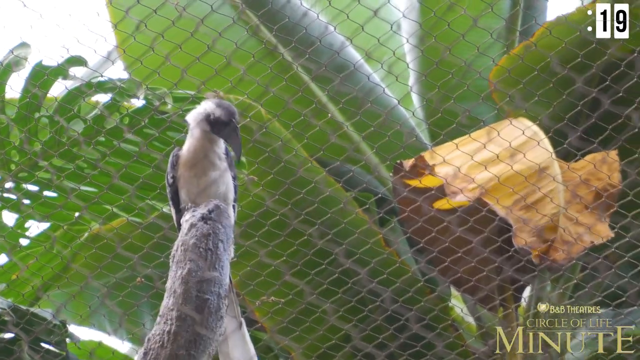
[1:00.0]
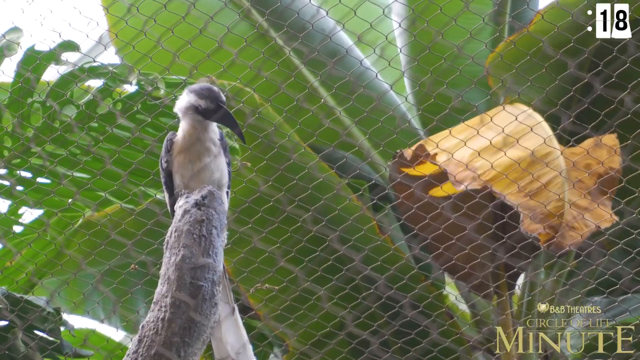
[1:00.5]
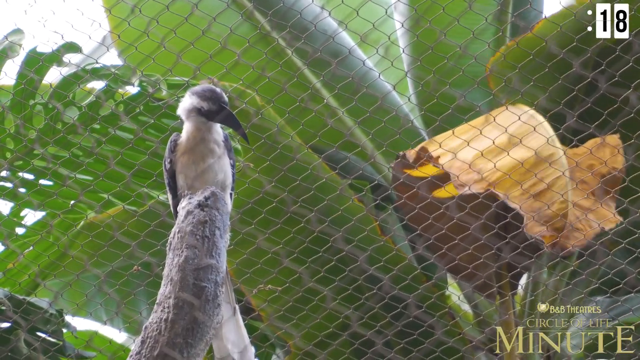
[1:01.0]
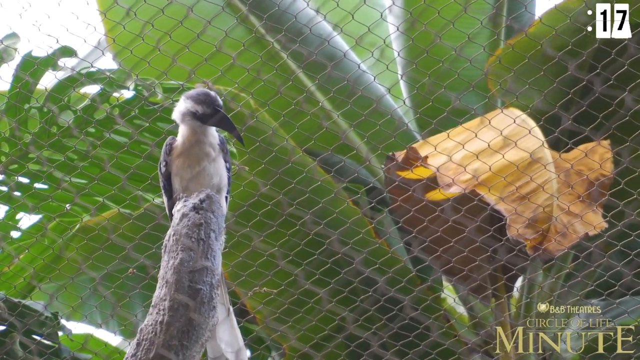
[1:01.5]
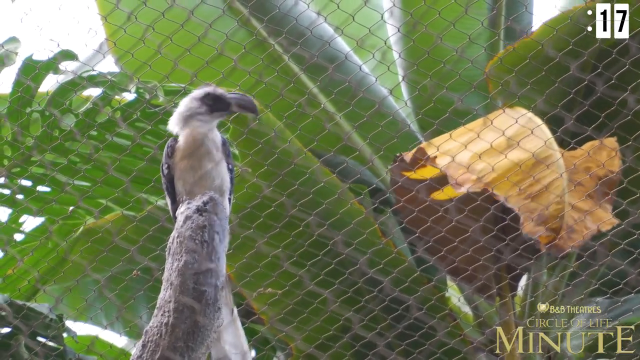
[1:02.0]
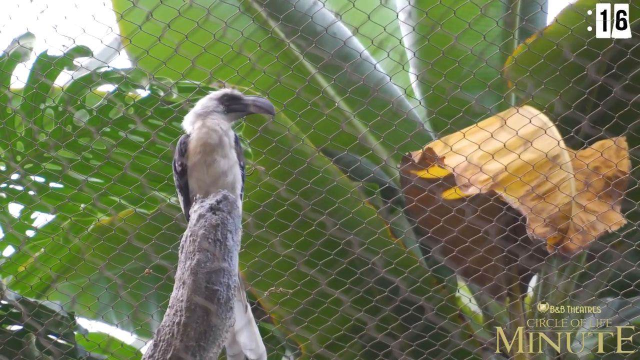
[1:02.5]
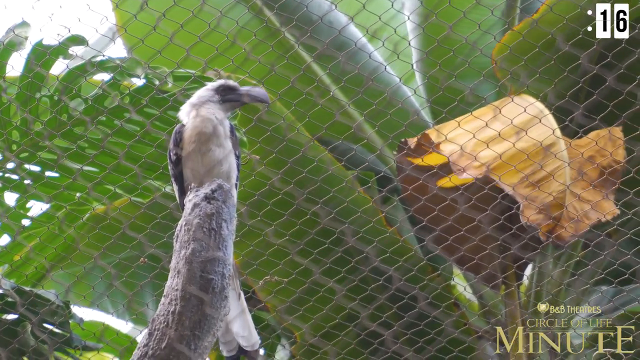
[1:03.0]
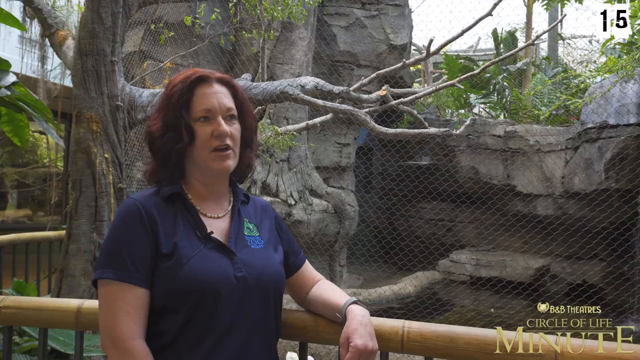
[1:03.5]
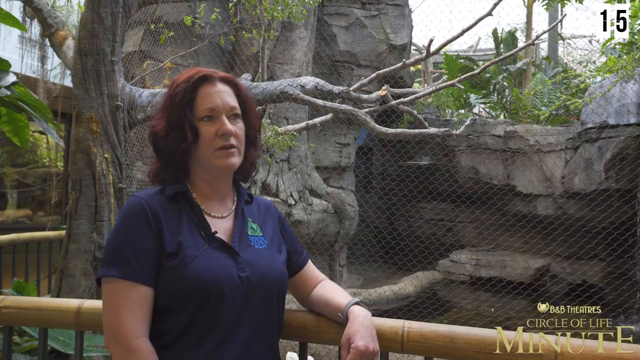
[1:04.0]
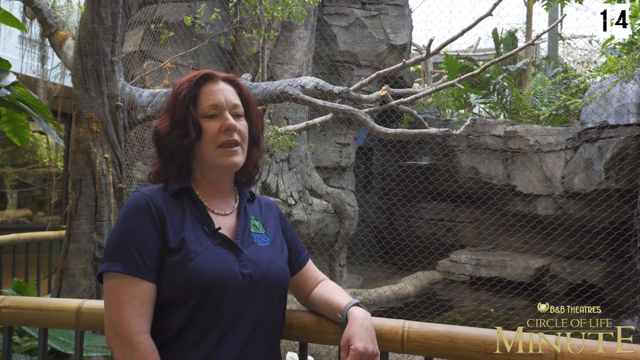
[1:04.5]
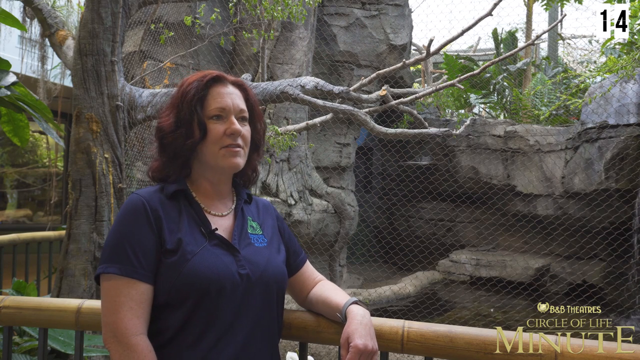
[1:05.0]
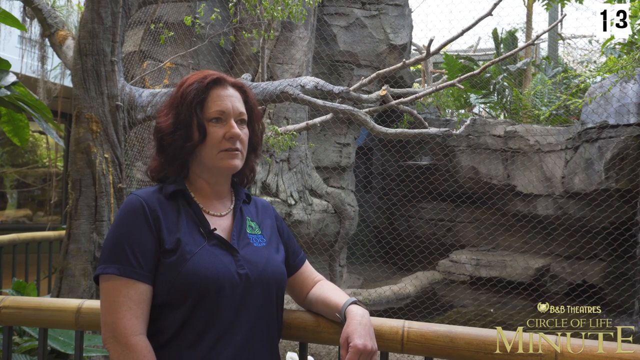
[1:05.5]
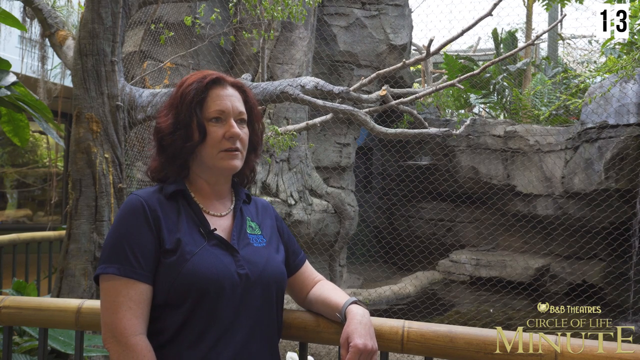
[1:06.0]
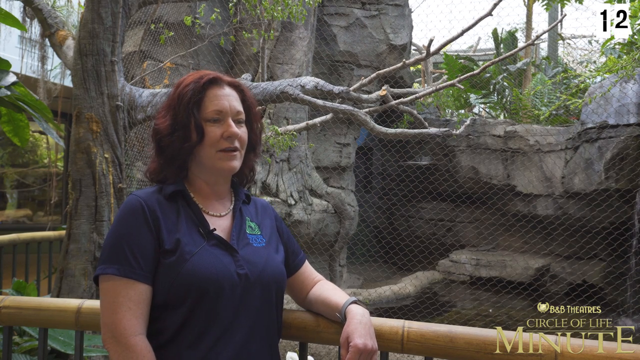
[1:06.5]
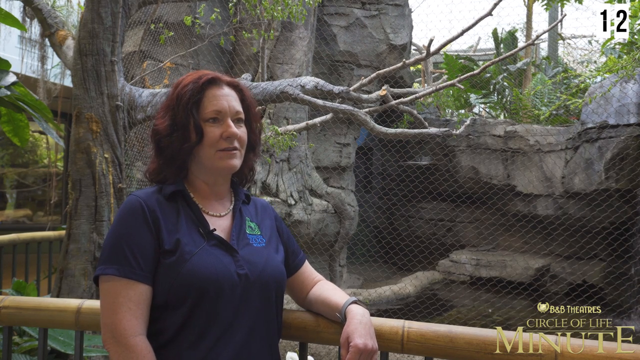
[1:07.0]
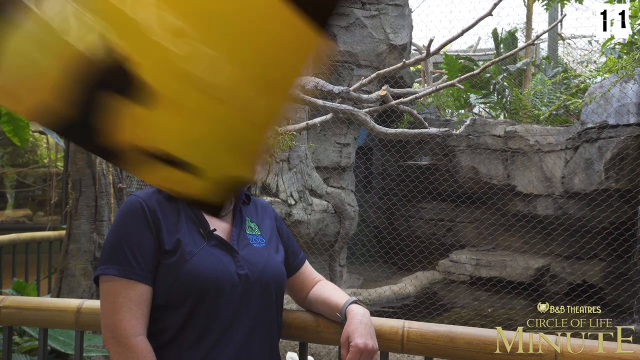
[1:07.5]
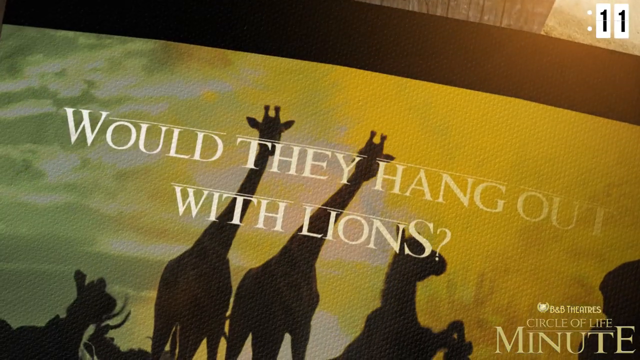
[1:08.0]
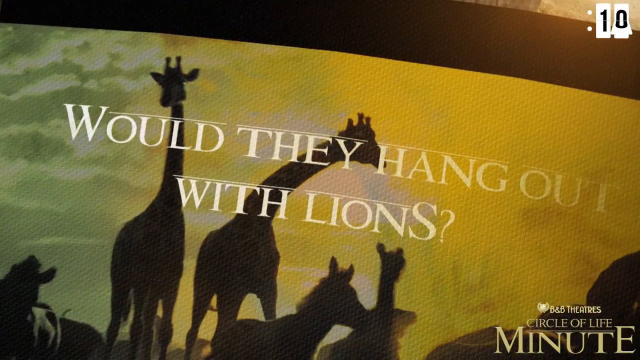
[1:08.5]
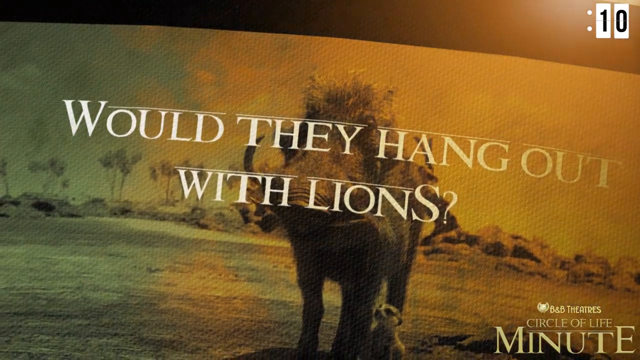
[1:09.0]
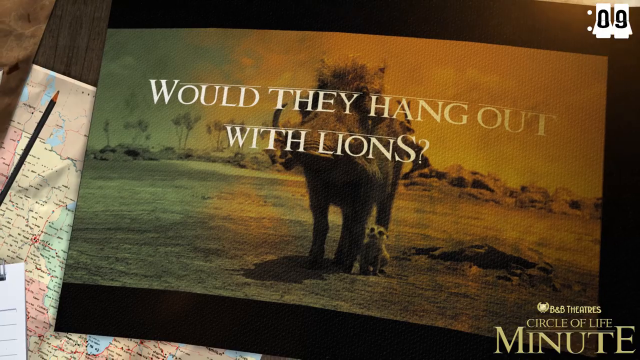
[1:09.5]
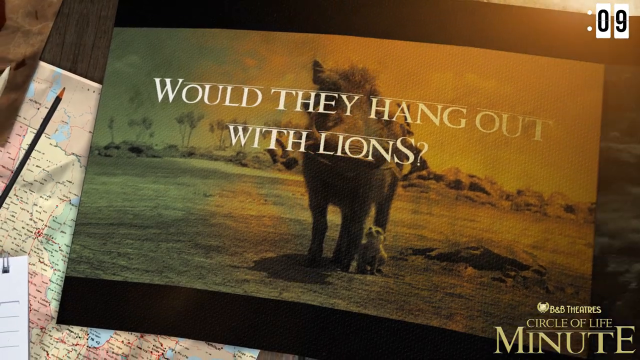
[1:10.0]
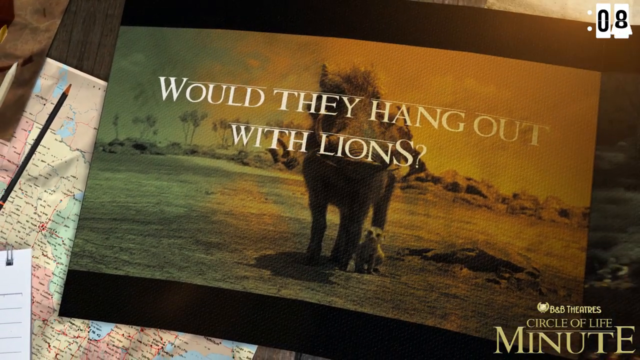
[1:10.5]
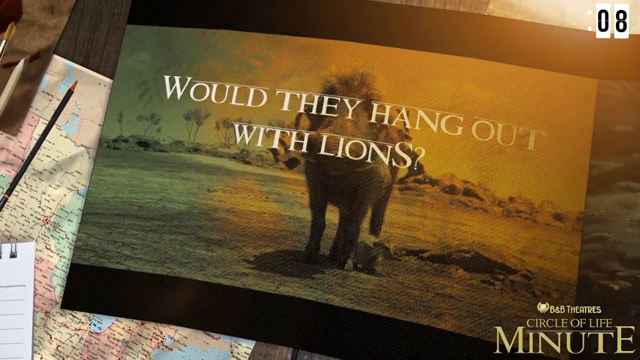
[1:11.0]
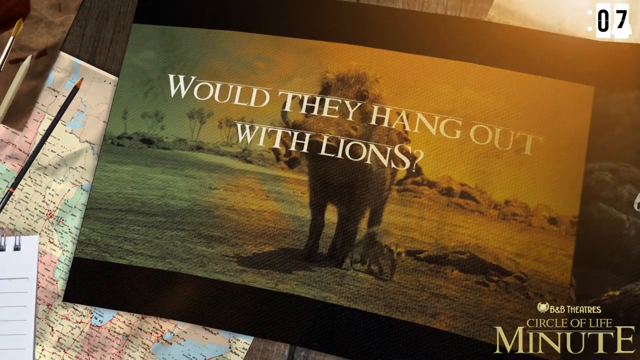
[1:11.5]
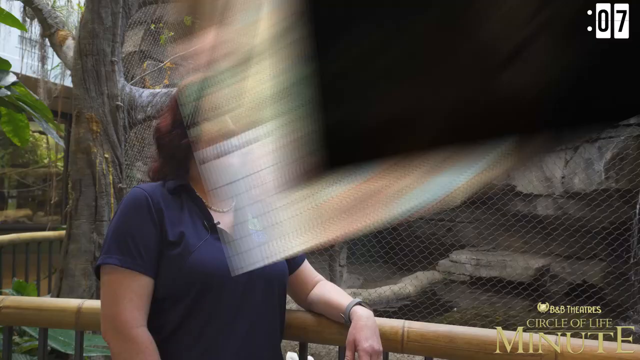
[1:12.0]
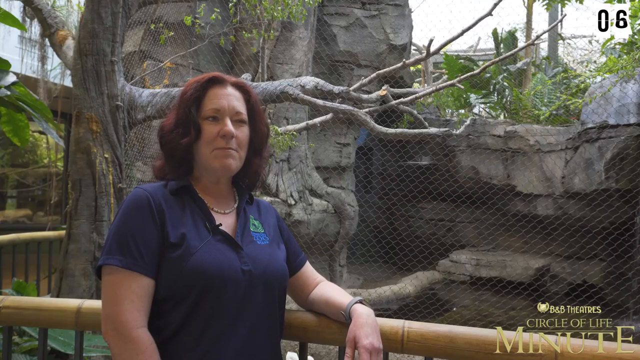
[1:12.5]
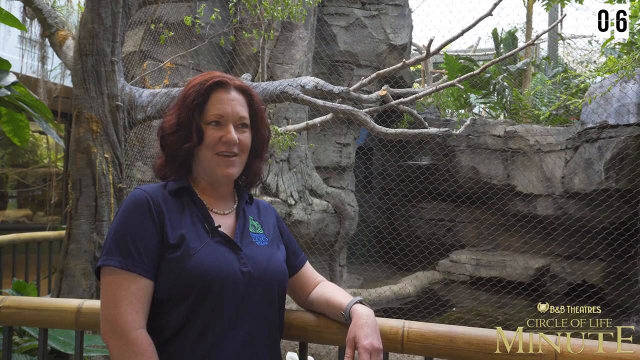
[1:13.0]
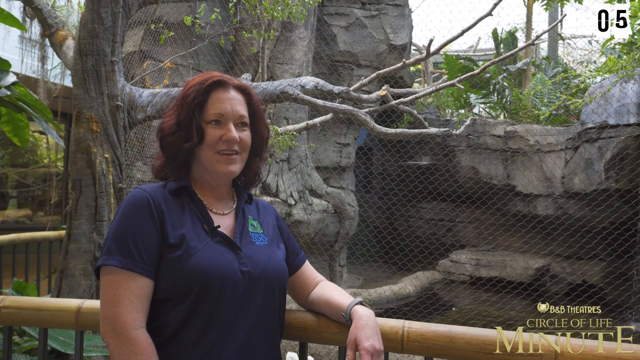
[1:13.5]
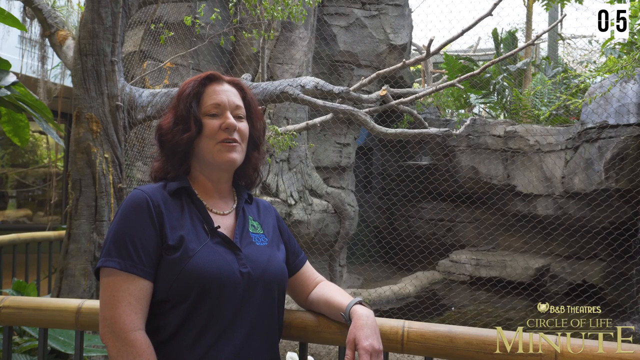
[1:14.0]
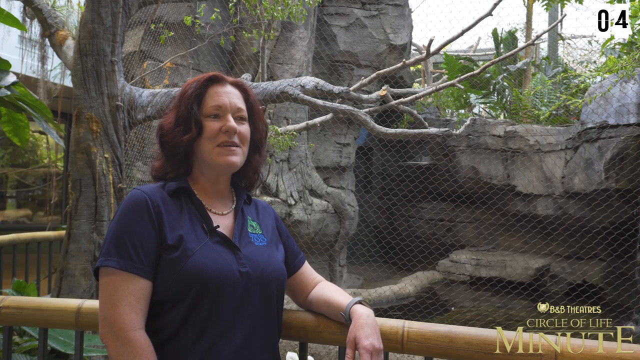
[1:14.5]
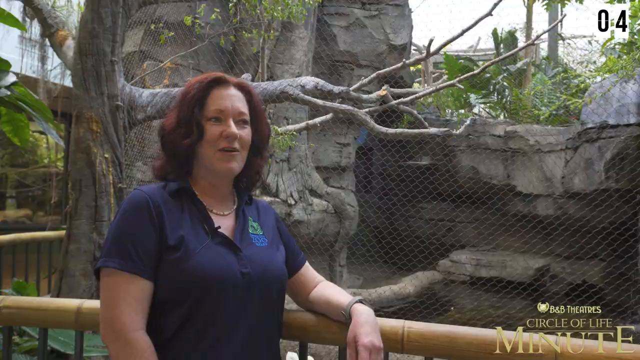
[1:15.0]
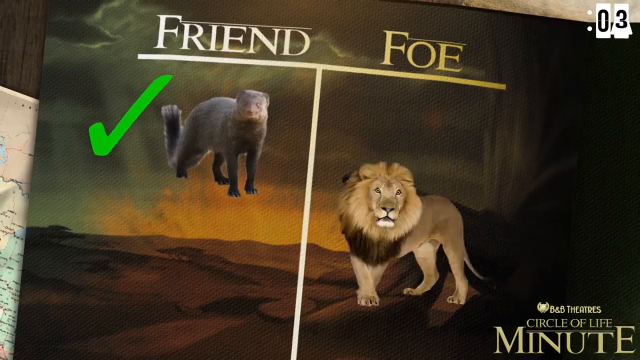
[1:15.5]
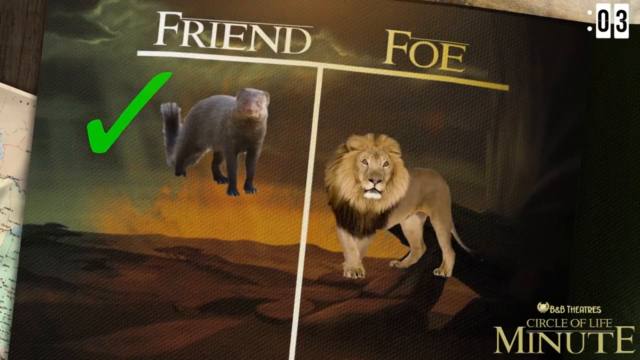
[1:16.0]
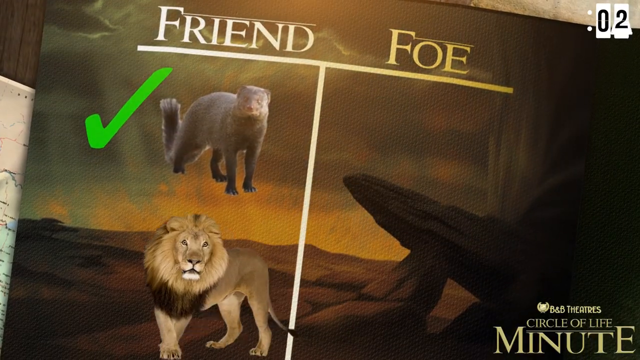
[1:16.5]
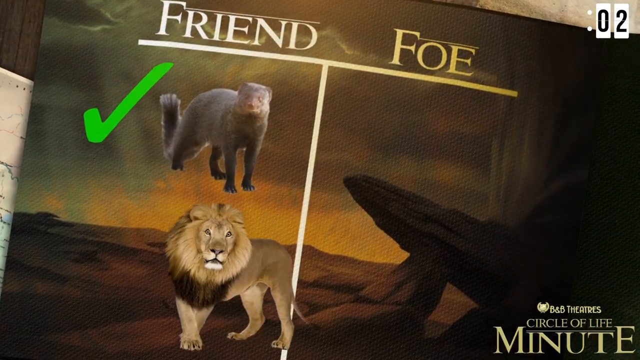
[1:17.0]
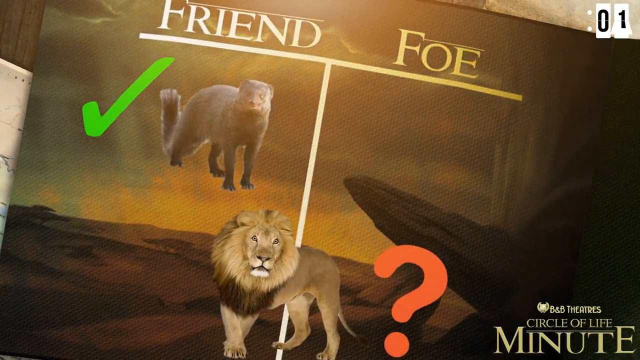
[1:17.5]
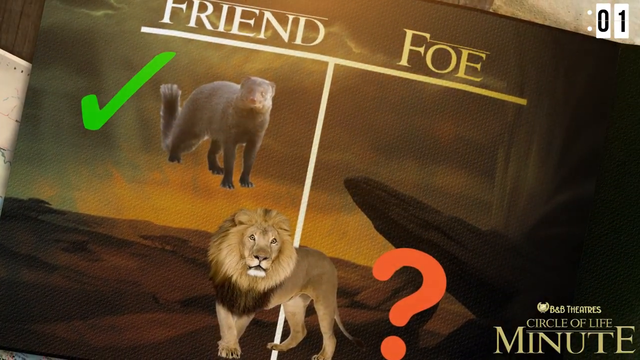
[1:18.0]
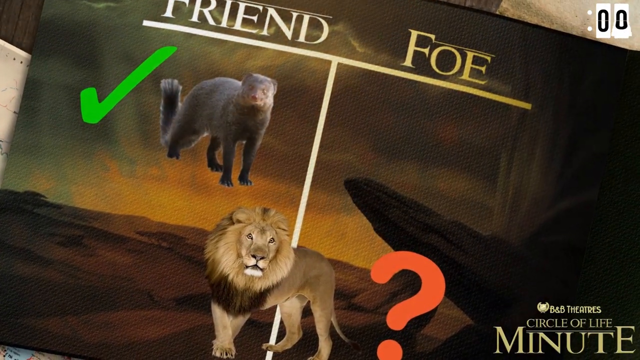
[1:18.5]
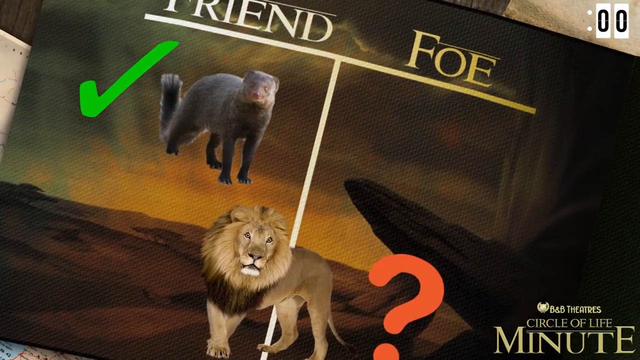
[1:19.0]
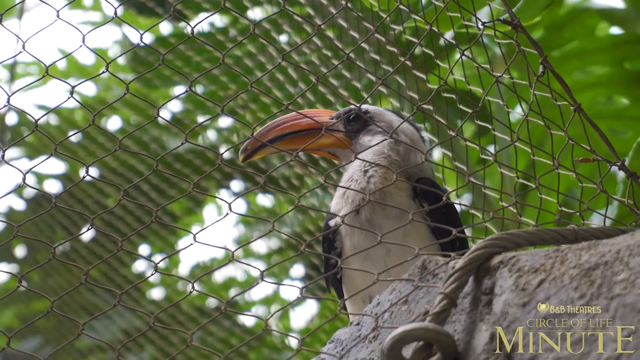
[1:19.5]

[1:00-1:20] Behind the wiring, big green leaves appear, and on top of a tree branch is the bird with the black beak, white body and yellow black wings. The video cuts to Heidi F as she talks to someone off camera. A screen appears showing first some giraffes with shadows of animals that seem to be zebras, and then the warthog and the meerkat, with a caption reading "would they hang out with the lions?" Heidi F is seen resting her arm on the wooden fence as she continues to speak. The friend or foe illustration then shows a picture of a lion, which is placed in the middle with a question mark, as if it is unknown. The shot ends on the bird with the orange beak behind the wiring.